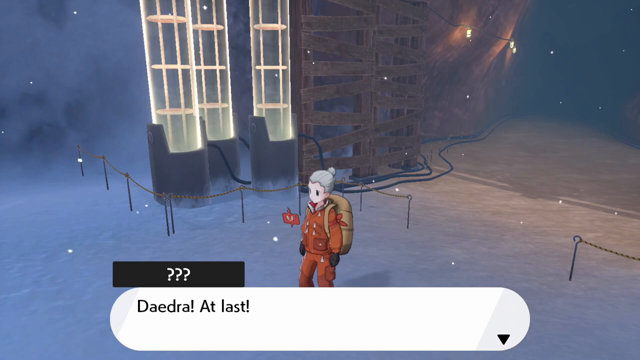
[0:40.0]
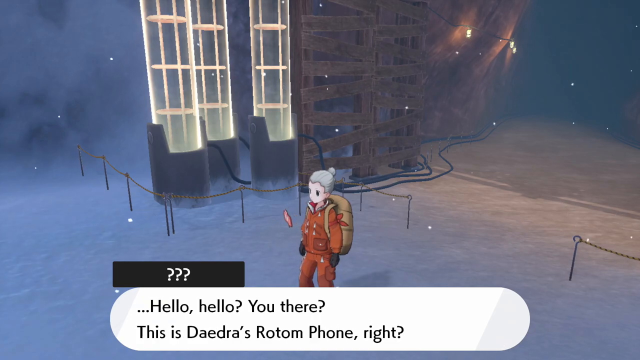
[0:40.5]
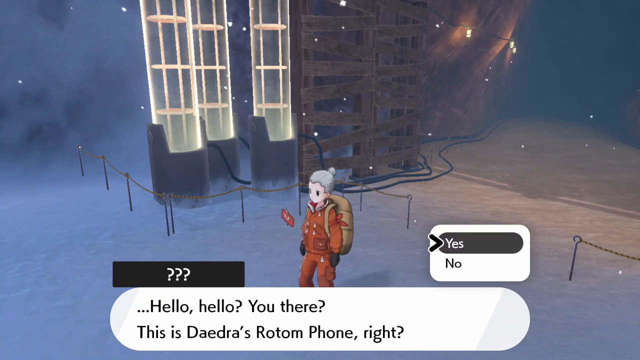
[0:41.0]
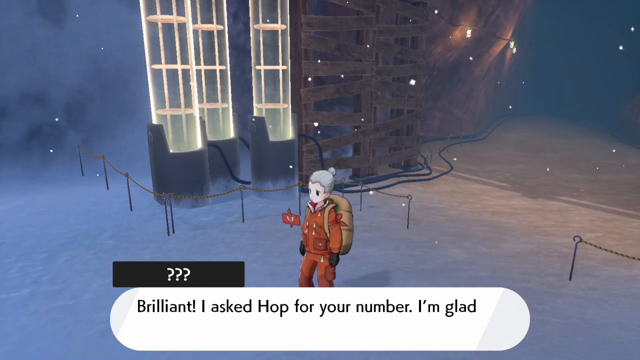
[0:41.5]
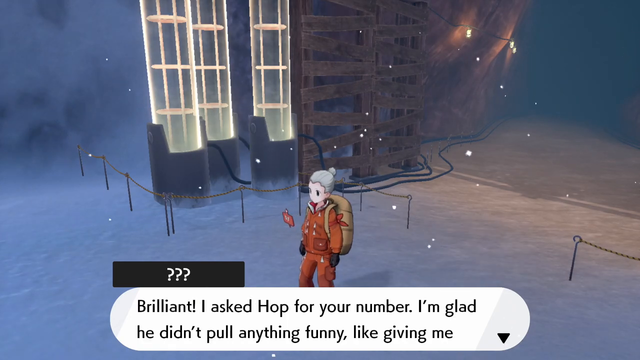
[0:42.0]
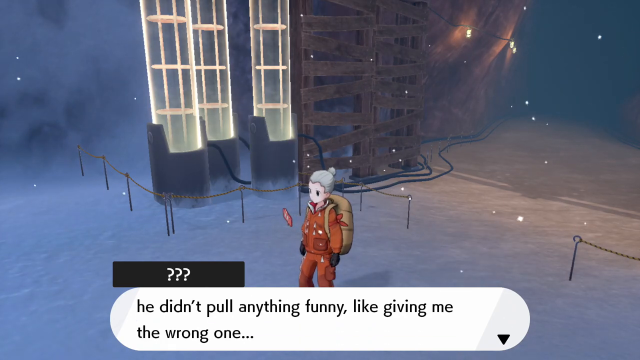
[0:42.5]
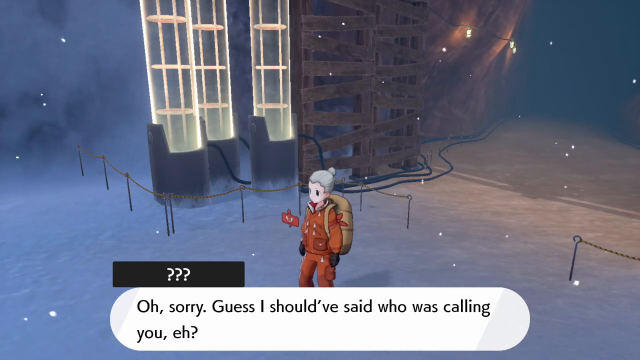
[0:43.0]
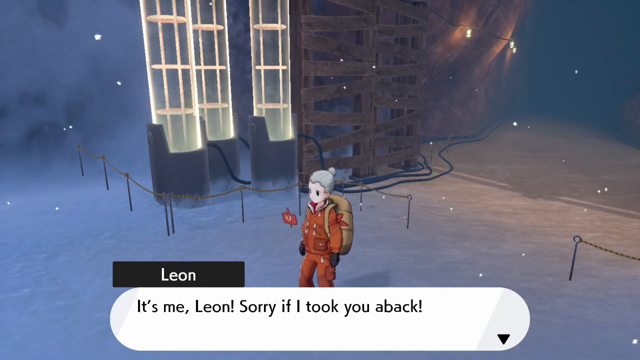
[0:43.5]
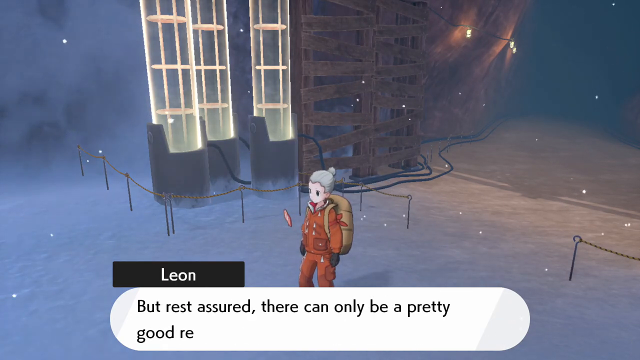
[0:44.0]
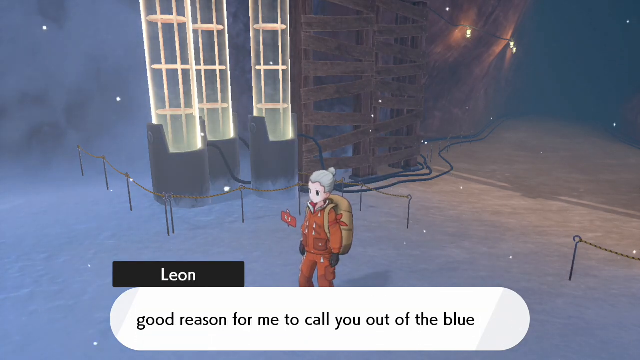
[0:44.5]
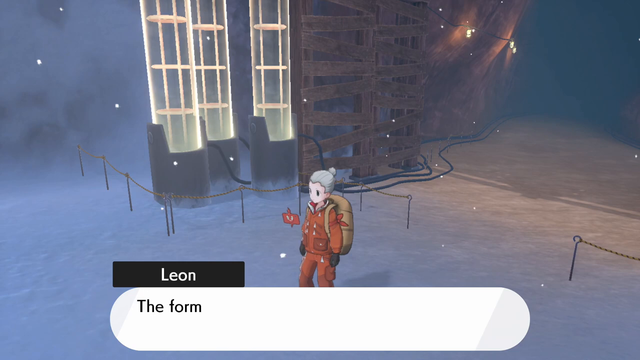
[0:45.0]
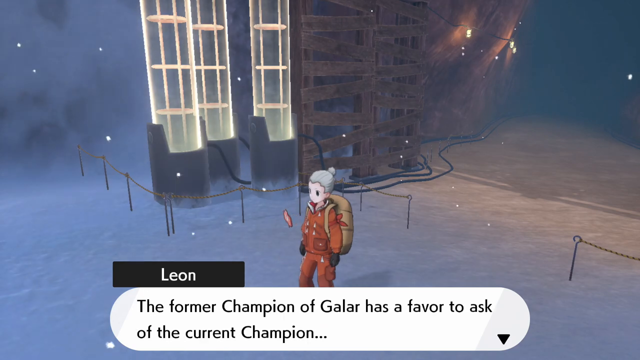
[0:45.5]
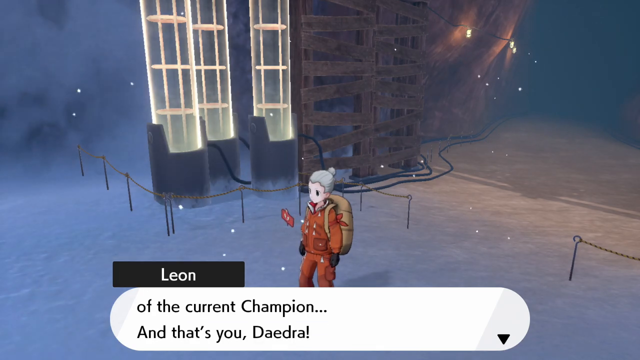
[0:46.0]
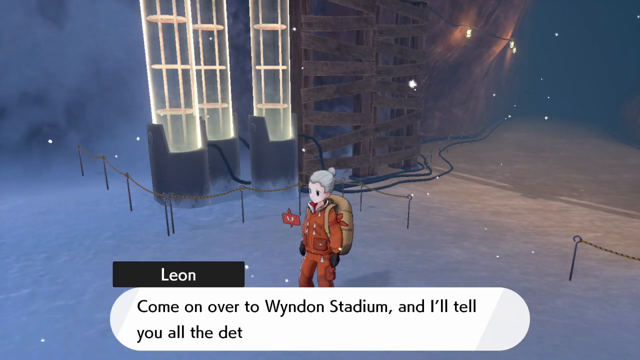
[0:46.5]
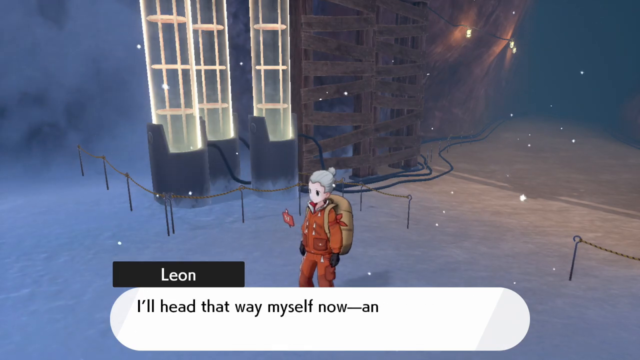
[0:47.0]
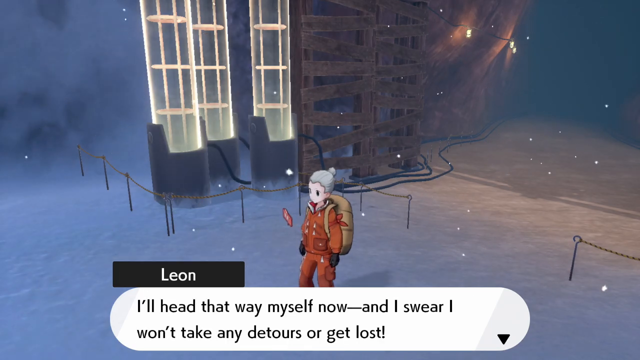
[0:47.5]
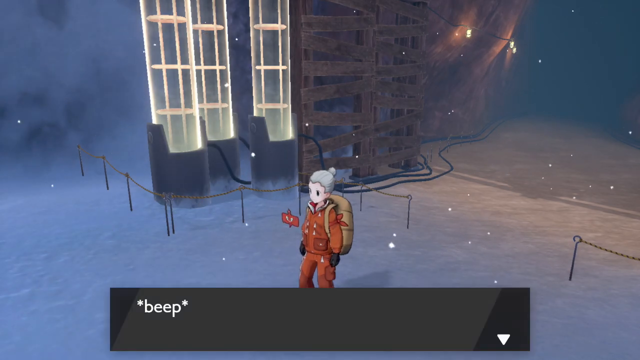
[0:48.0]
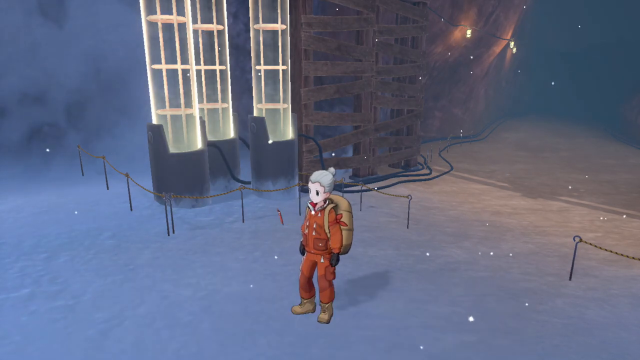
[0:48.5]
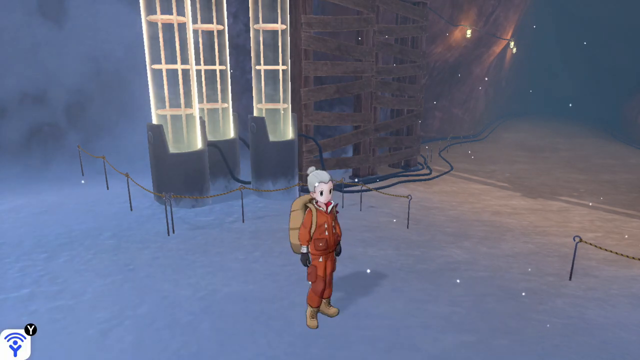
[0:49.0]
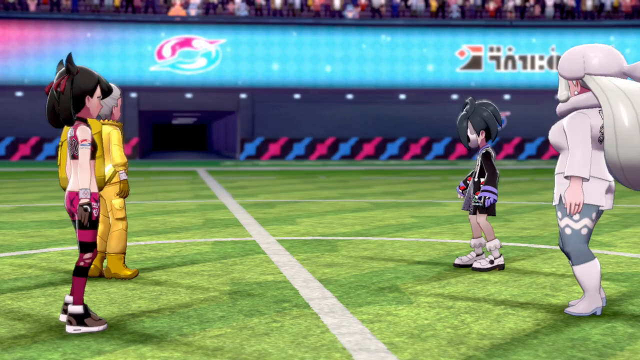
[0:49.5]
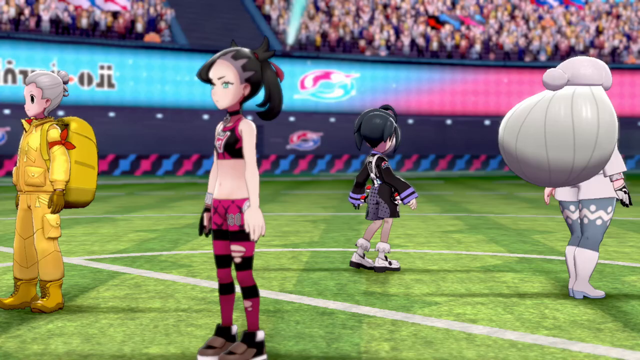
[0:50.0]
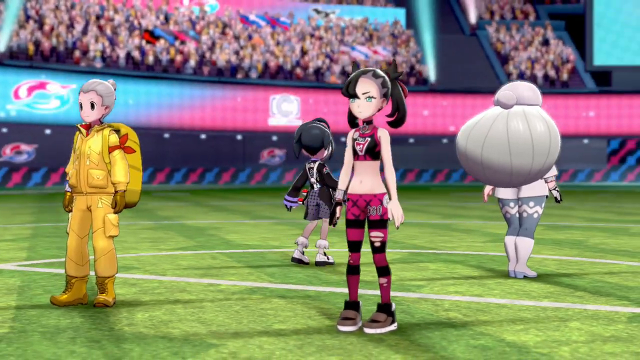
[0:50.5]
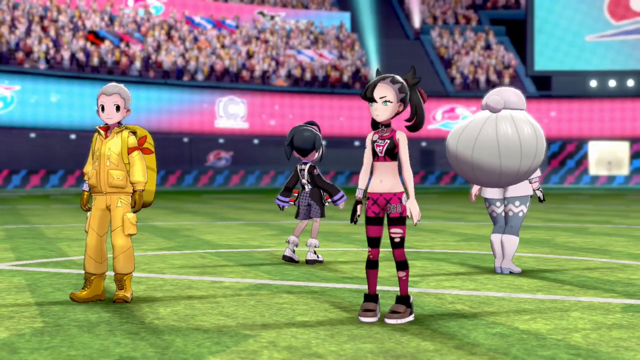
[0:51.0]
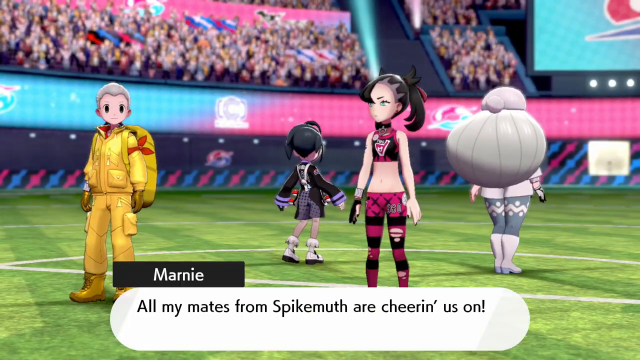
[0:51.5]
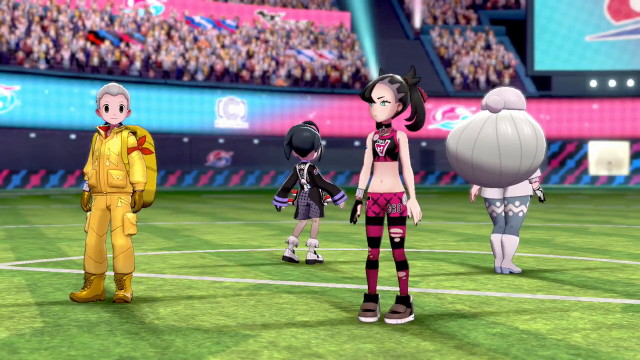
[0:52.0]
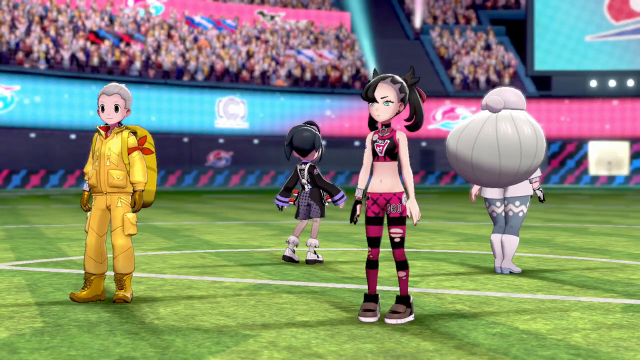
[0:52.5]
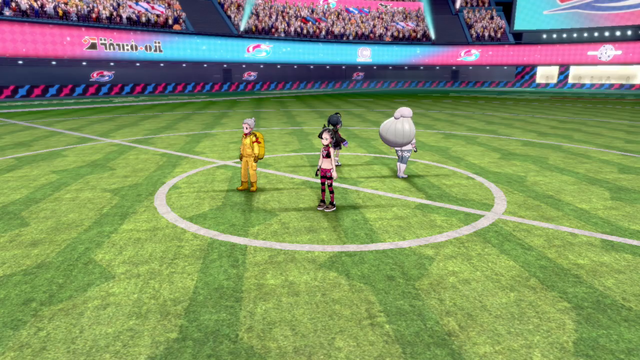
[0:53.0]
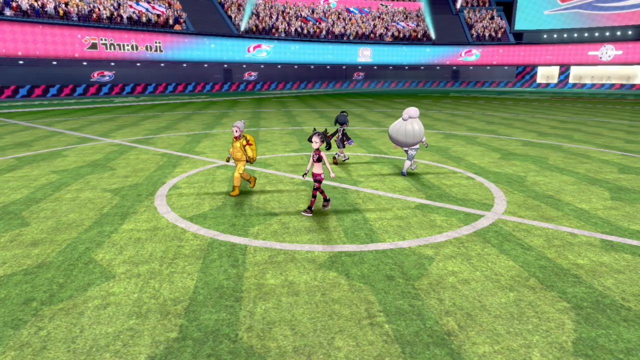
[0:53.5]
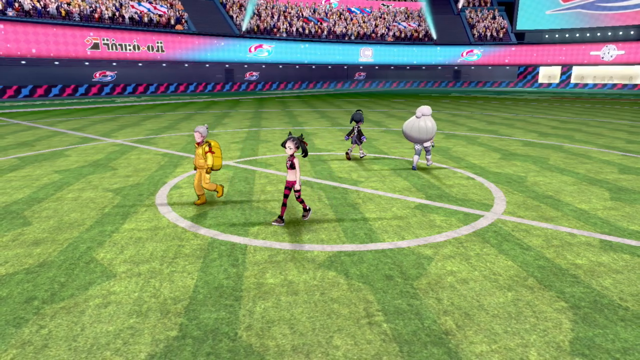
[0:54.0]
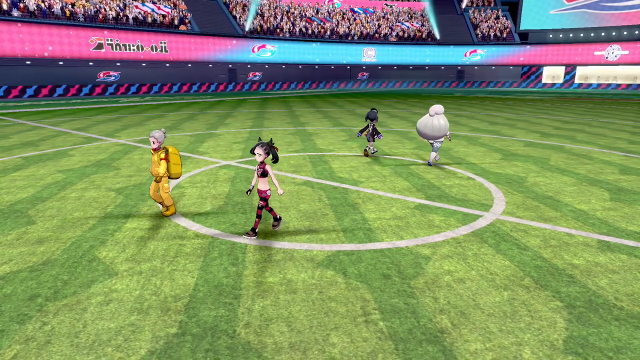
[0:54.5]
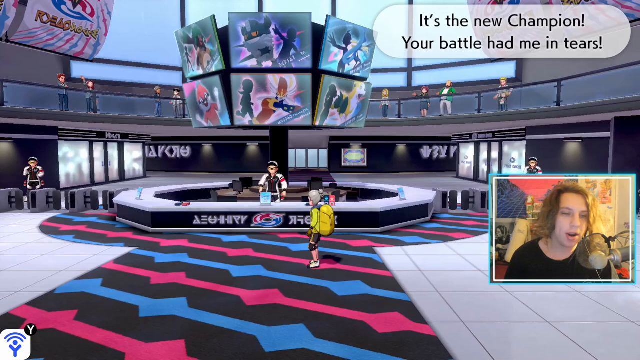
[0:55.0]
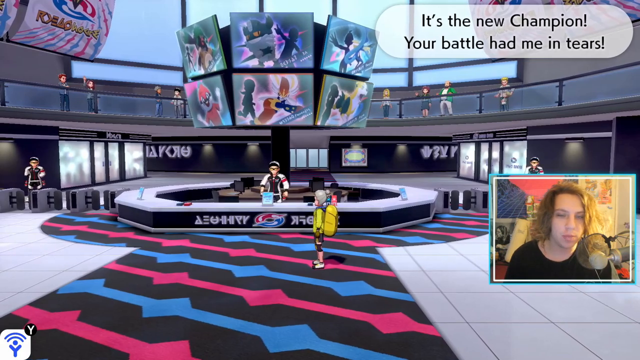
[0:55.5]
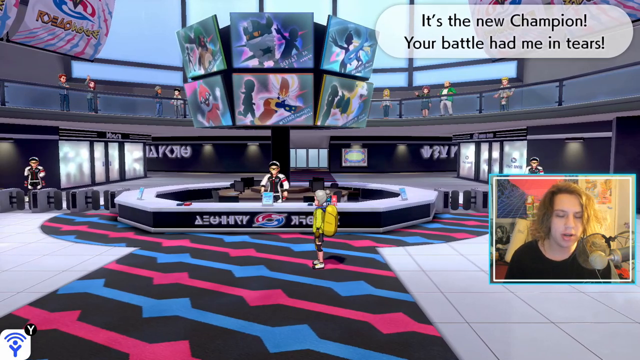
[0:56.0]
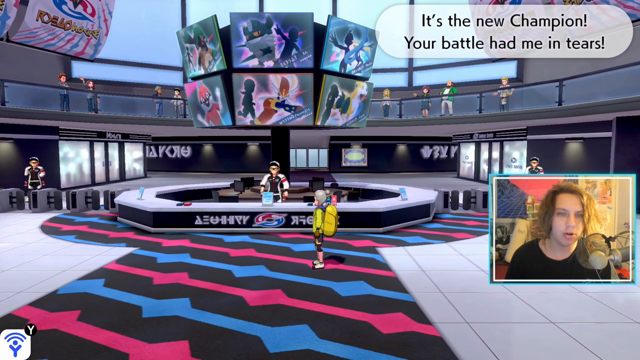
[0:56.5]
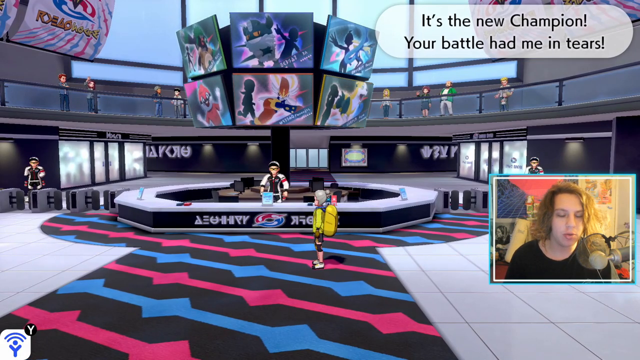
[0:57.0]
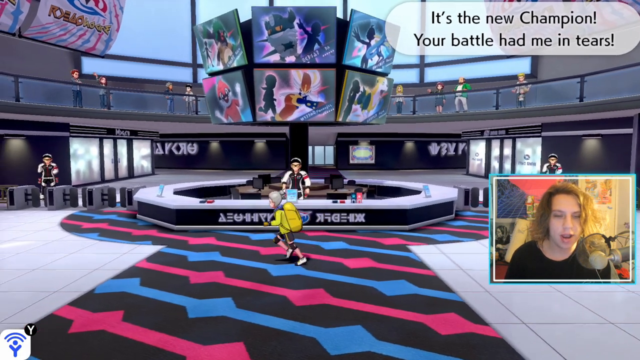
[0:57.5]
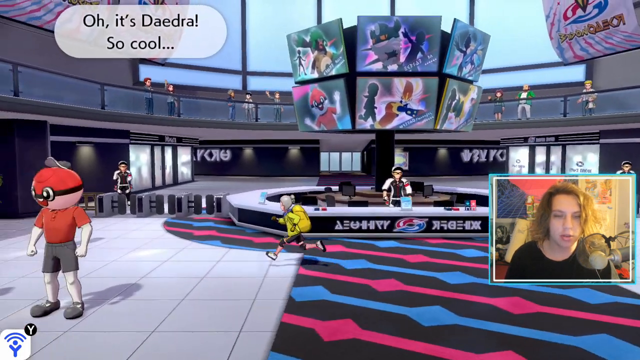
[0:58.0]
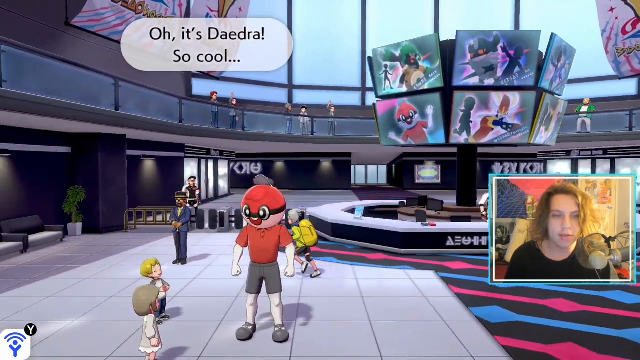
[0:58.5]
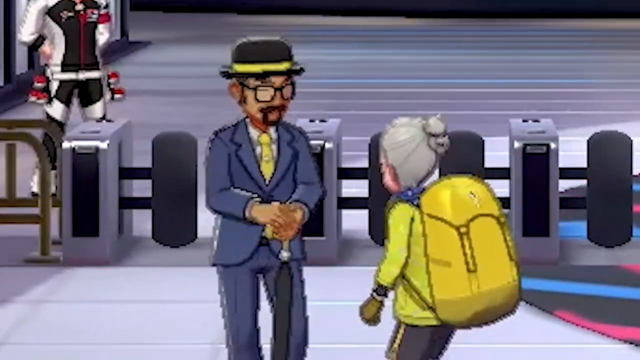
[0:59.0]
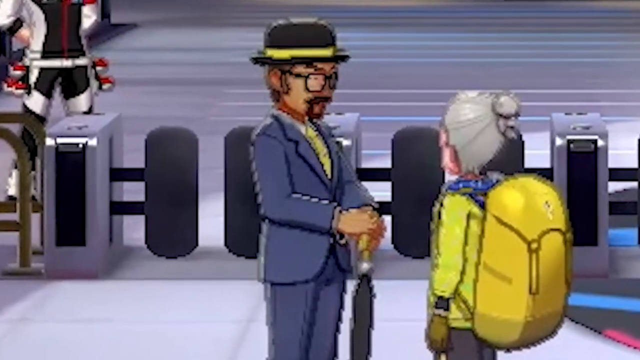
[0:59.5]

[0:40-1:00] The characters are outside in the cold, one wearing an orange jacket and a tan backpack. Three question marks appear with the text "hello, hello, you there?" and the options yes or no. The text is skipped through and moves across the screen very fast. The character turns briefly, and then the scene changes to four characters on what looks like a soccer field, with a stadium full of people in the background. The player's character is on the left, a female character is to the right, and the other two characters walk the opposite way. The scene changes again to the character inside what looks like a building lobby. On the right-hand side the YouTuber appears, speaking into the microphone, as the character runs to the left and is greeted by a man in a suit and a fedora.